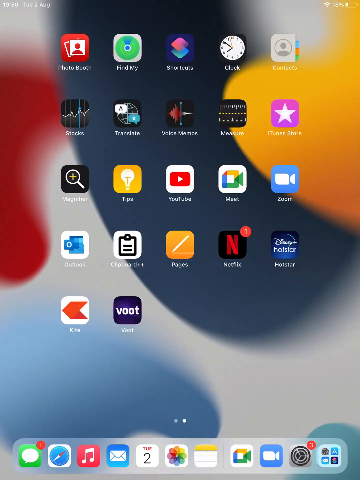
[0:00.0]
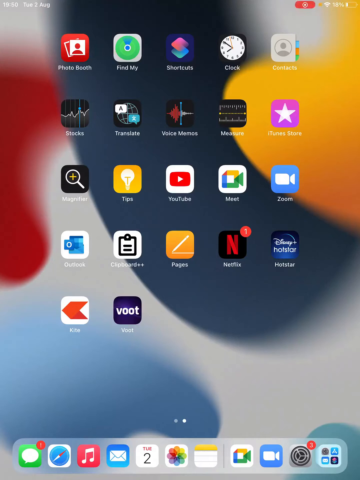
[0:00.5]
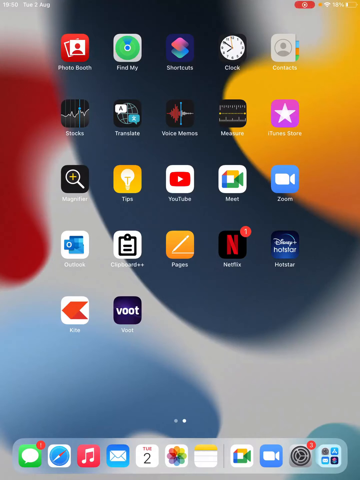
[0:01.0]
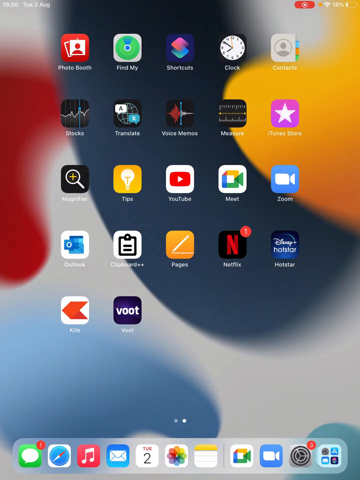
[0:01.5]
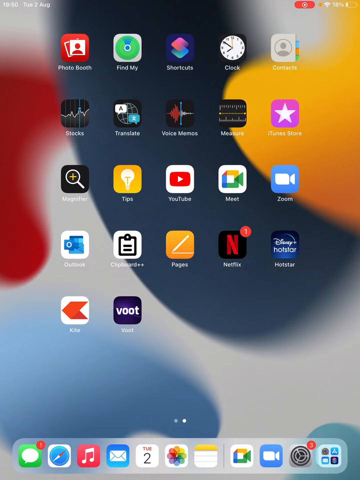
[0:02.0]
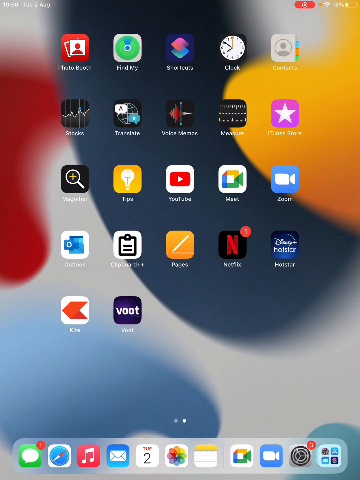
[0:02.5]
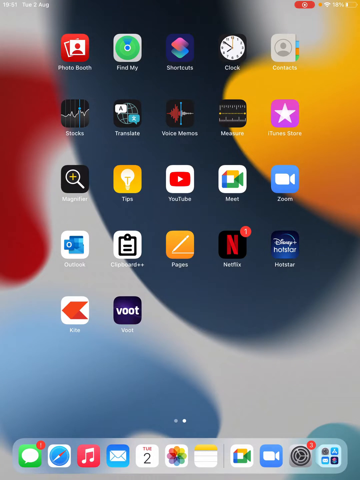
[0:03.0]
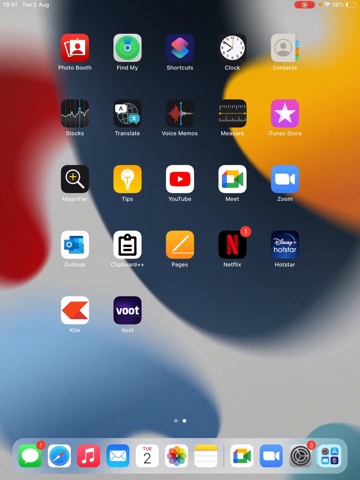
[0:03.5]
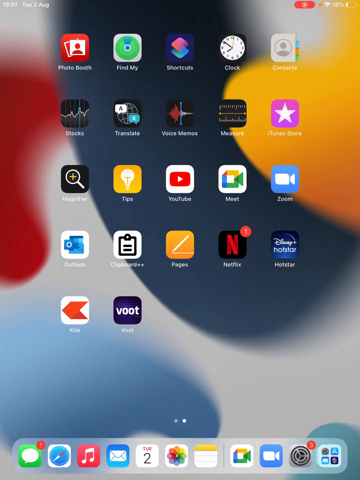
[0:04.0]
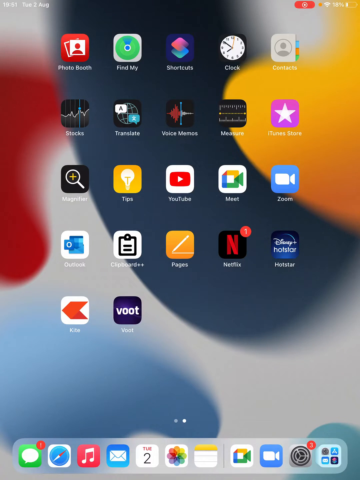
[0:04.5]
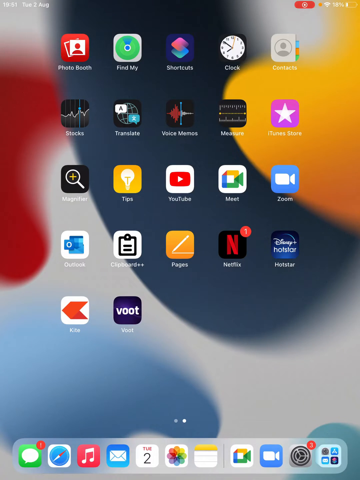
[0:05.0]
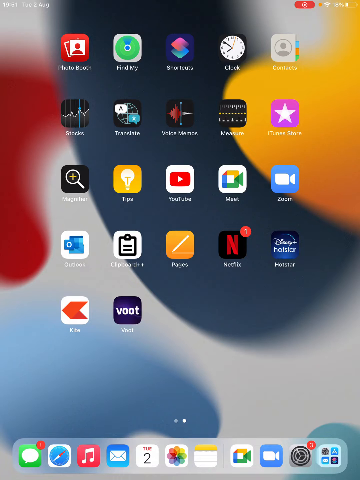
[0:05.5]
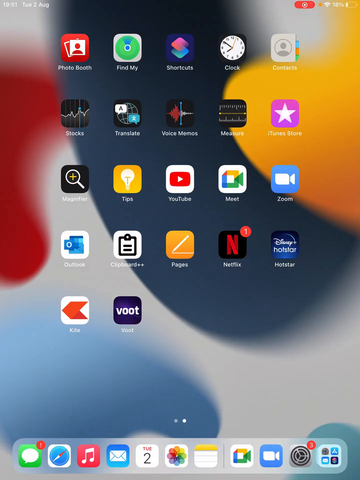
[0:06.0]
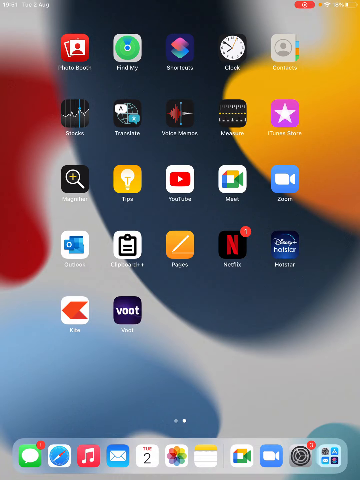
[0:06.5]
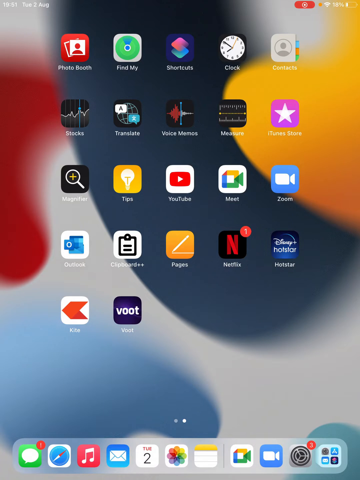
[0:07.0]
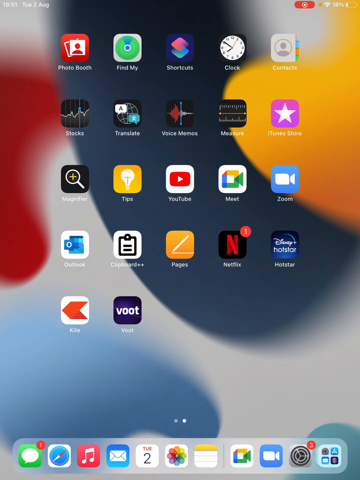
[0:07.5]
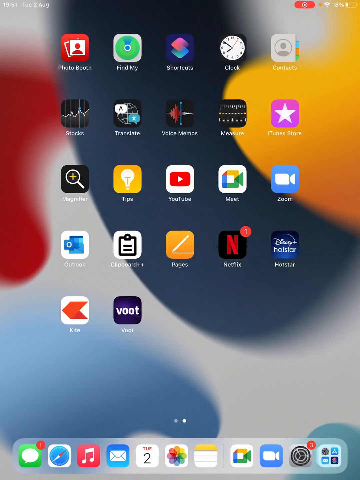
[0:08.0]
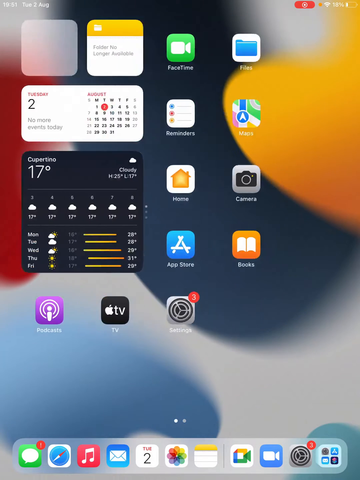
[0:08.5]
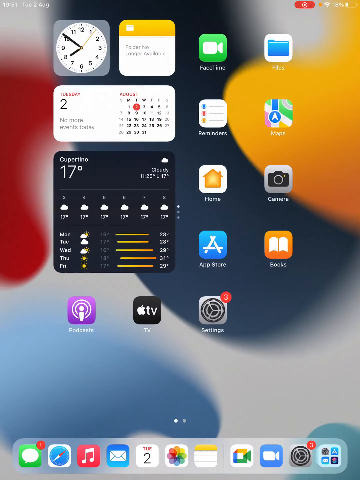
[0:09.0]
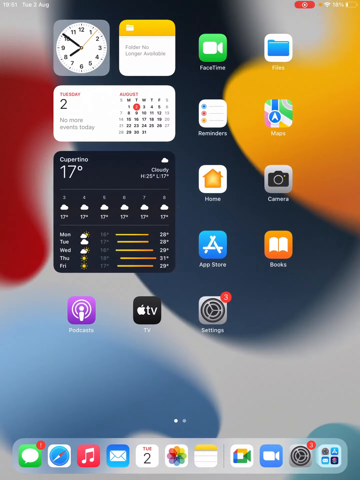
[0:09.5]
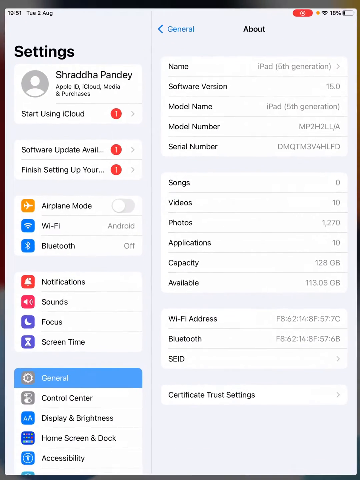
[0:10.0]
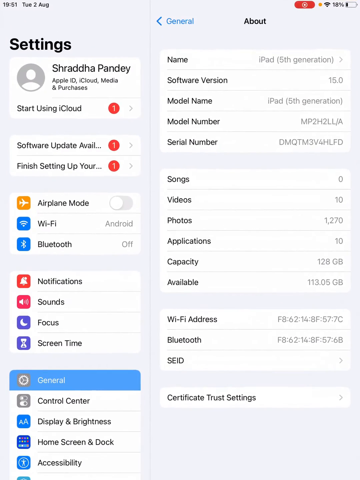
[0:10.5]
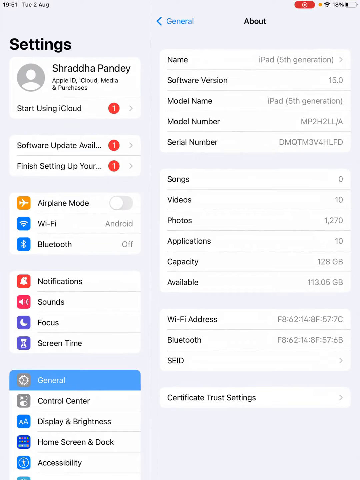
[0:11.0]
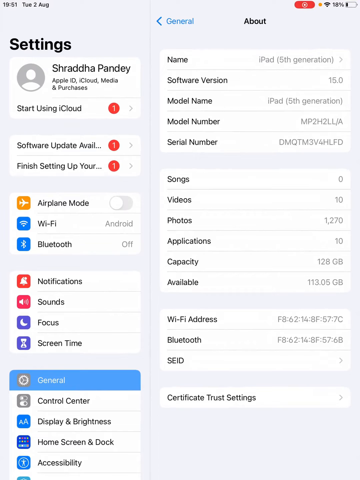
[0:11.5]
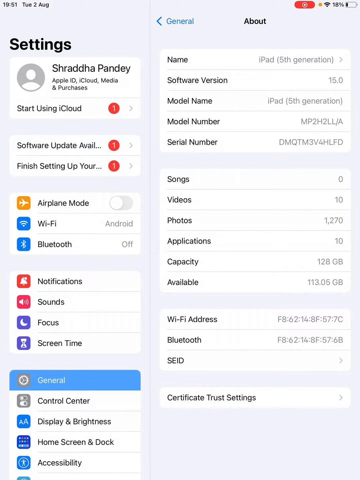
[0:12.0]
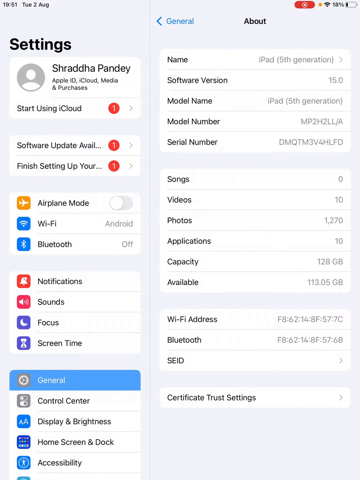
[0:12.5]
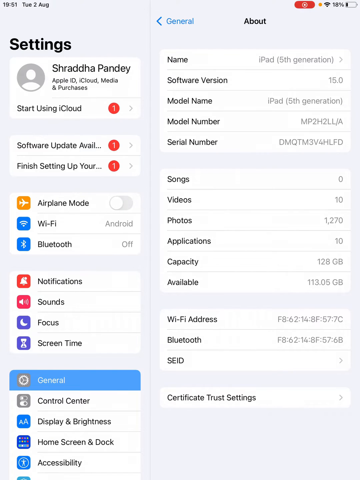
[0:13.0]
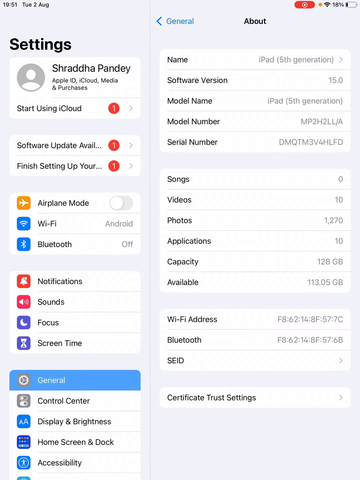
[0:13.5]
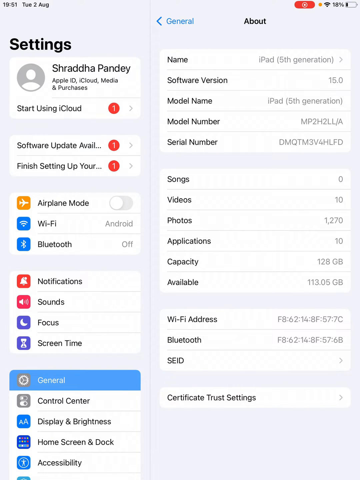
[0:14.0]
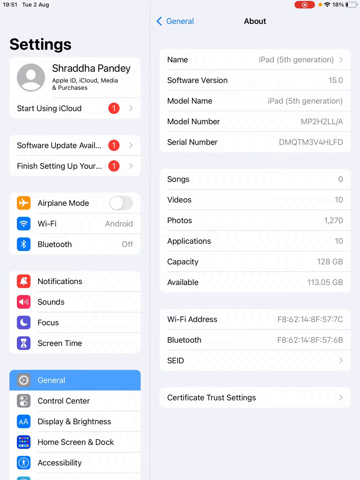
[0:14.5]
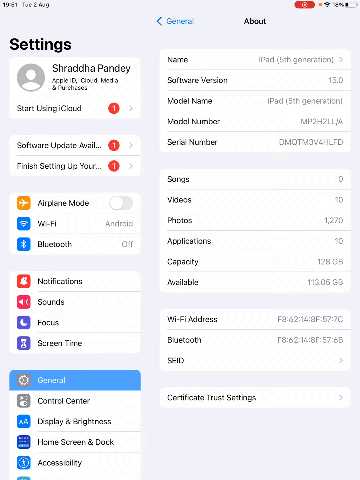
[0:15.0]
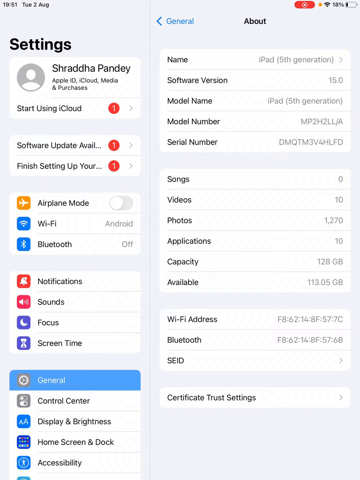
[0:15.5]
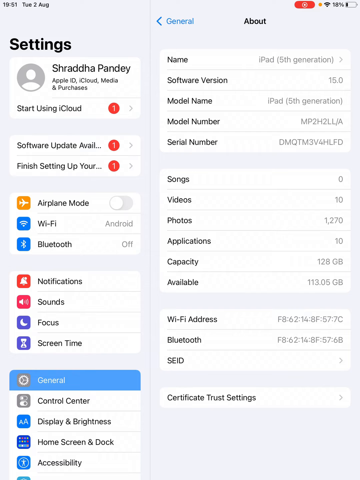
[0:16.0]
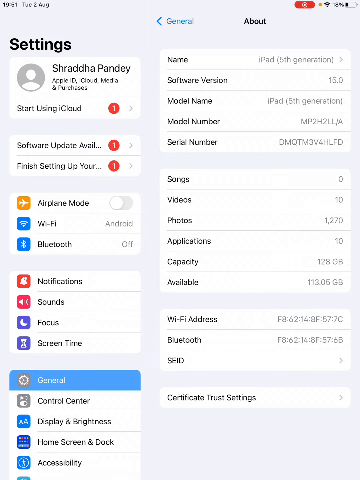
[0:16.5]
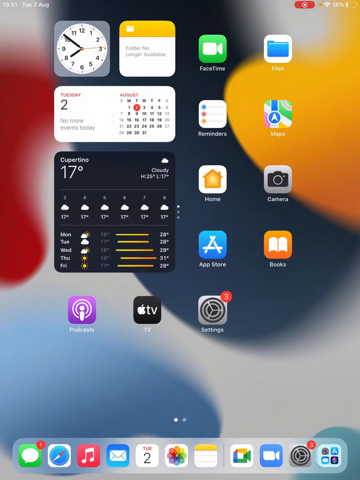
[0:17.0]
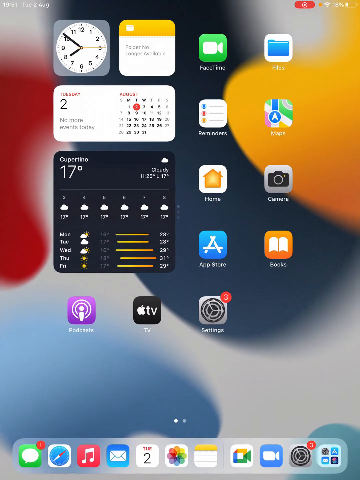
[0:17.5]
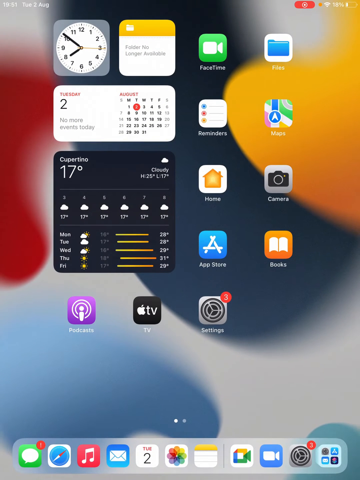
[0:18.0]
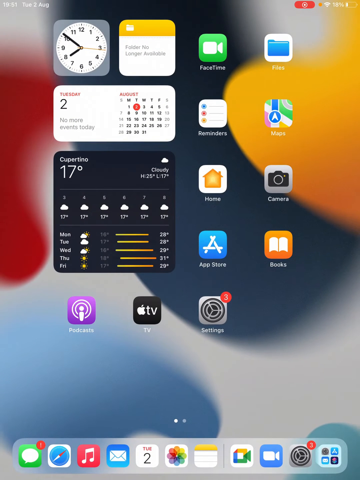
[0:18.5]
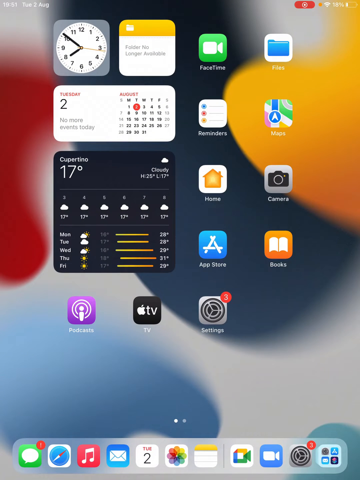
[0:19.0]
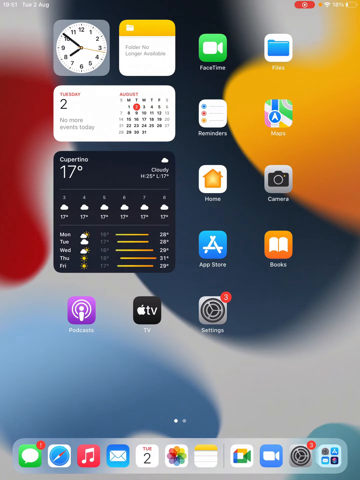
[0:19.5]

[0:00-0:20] The view appears to be the screen of a tablet or phone, recorded directly from the screen rather than filmed from outside it. The background is a set of blobs of colour: from left to right a red blob, a blue blob and an orange blob, with white below them and another blue blob in the bottom left corner. A large number of apps are arranged roughly in the middle, and a row of apps runs horizontally across the bottom. The whole page then swipes to the right, the apps moving off to the right and disappearing, and a new page of apps appears. In the top left is a clock app showing a traditional analog clock with the 12 numbers around it. To its right is an app with a yellow horizontal bar at the top, a little white folder in the top left corner of that bar, and a white area below with the gray text "folder no longer available". Below these is a date widget the size of the two apps above it, forming one longer rectangle rather than two squares. At the top of its left side it says "Tuesday" in pink, below that a larger black "2", and below that smaller gray text reading "no more events today". On the right side it says "August" in pink with a calendar below, where the 2nd is highlighted with a red circle. Below that is a weather widget about the size of the previous three apps together, forming a larger square. In white text on the left it says "Cupertino" with a larger "17 degrees" below. On the right is a small cloud picture with "cloudy" beneath it and "H25 degrees L 17 degrees". Below that, the numbers three through eight run horizontally, each with a cloud and a temperature under it, all reading 17 degrees. Beneath that, Monday, Tuesday, Wednesday, Thursday and Friday are listed vertically, each with an icon to the right of the name: the sun appearing from behind a cloud, just a cloud, the sun appearing from behind a cloud, just a sun, and just a sun. To the right of each is a grayed-out temperature: 16, 12, 16, 18 and 17 degrees, followed by a horizontal gradient bar going from yellow to orange, the bars all of different sizes, and then another temperature: 28, 28, 29, 31 and 29 degrees respectively. There are 11 other apps on the page. The person taps an app toward the bottom right, a gray box with a picture of a gear and a red circle containing a white three in its top right corner. It opens a Settings menu with "Settings" in black at the top and a great many settings listed. The app is then closed: its icon reappears on the screen, shrinks, and goes back to its original place.